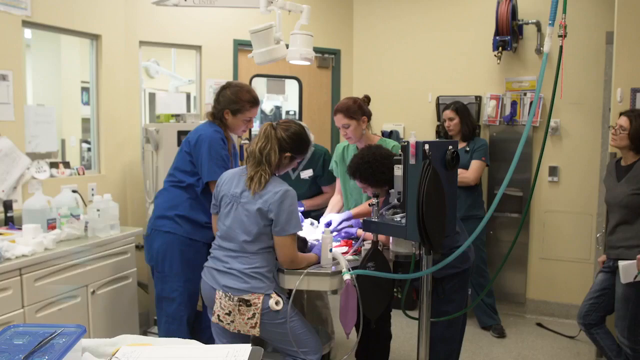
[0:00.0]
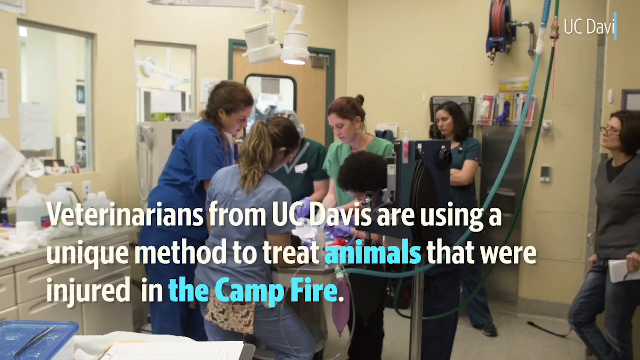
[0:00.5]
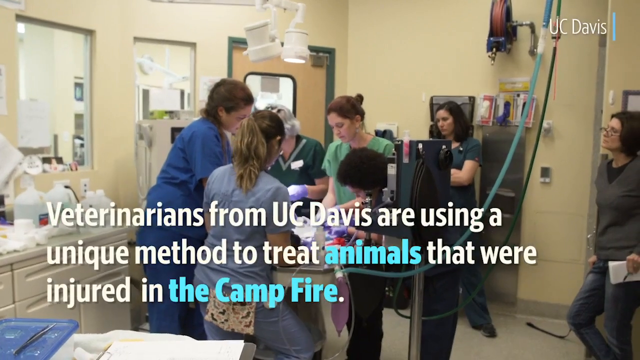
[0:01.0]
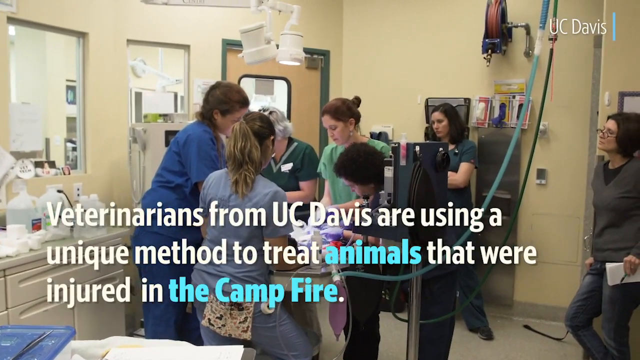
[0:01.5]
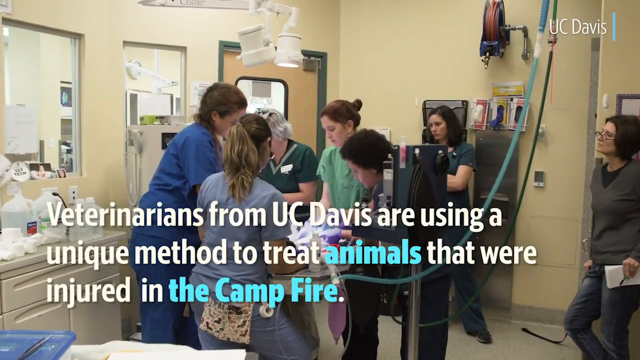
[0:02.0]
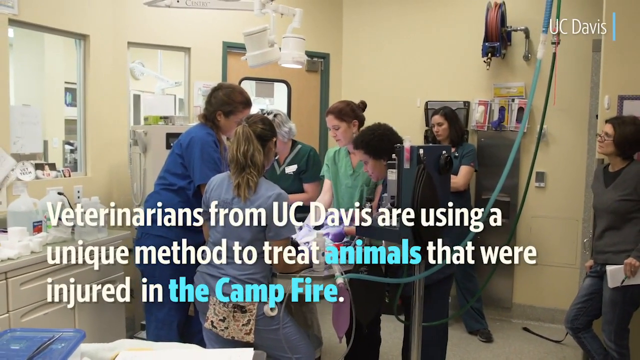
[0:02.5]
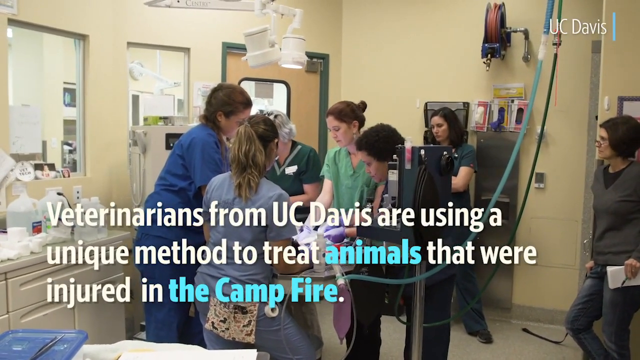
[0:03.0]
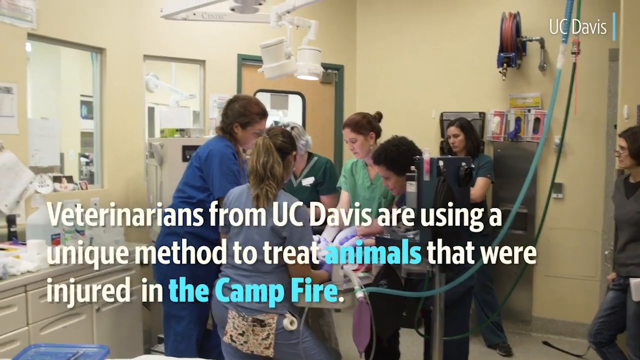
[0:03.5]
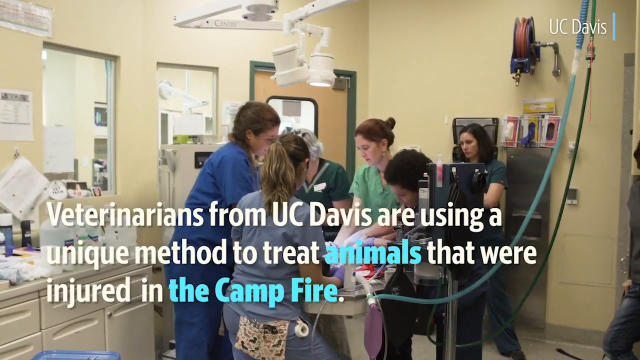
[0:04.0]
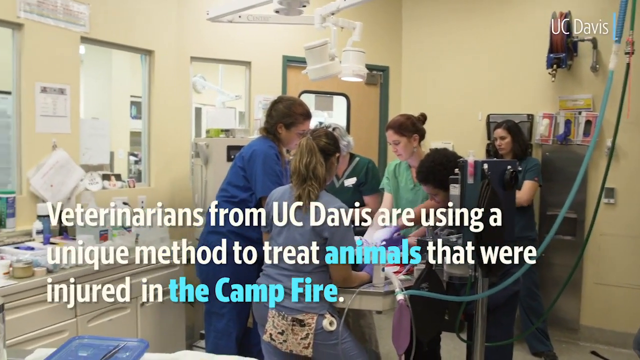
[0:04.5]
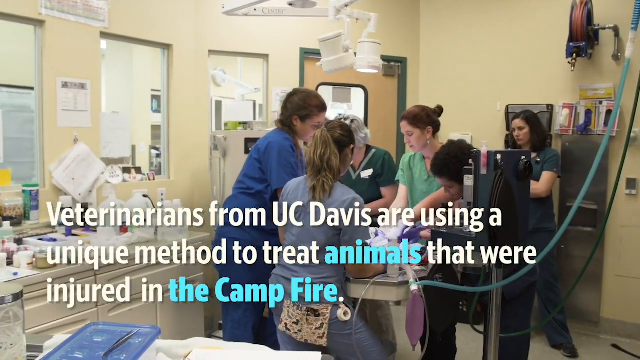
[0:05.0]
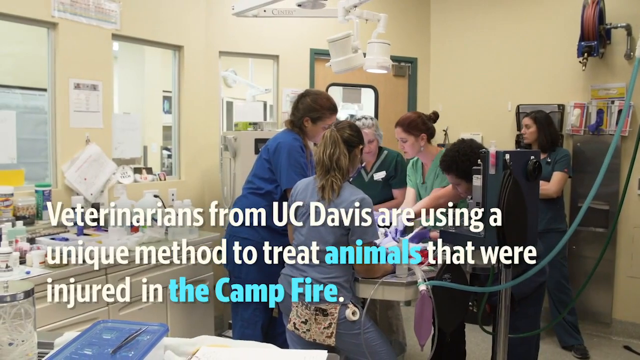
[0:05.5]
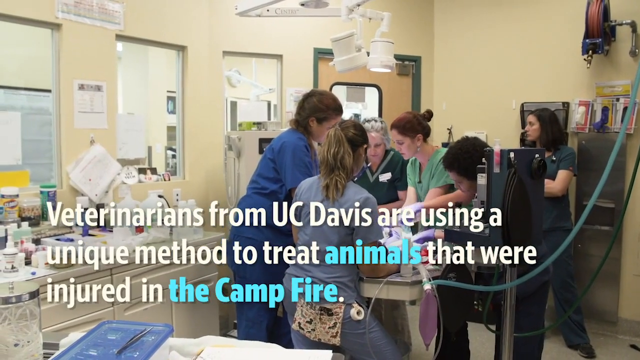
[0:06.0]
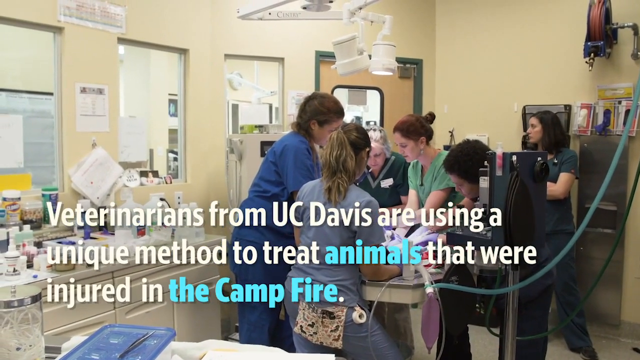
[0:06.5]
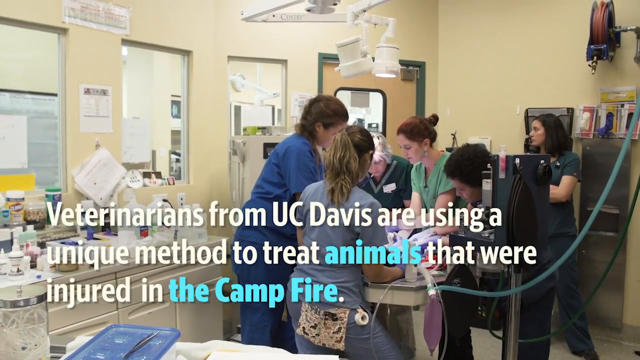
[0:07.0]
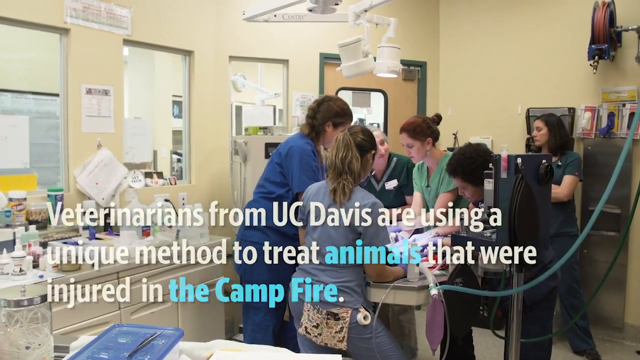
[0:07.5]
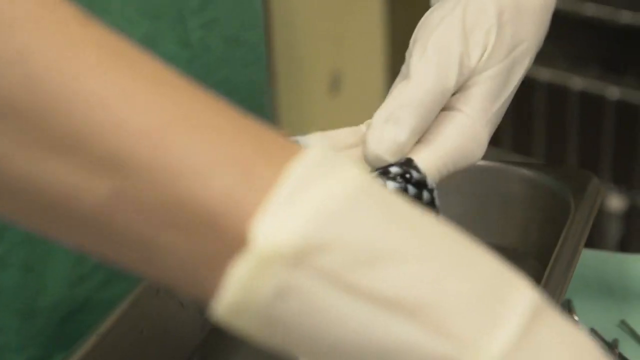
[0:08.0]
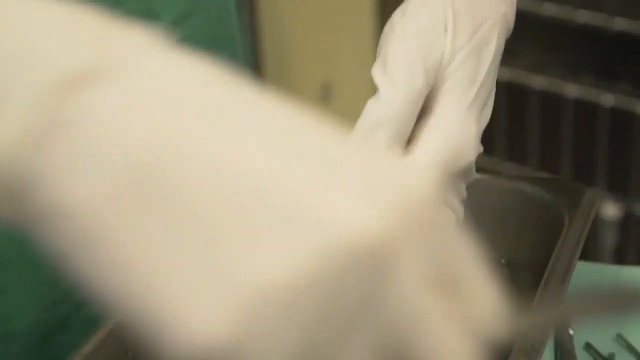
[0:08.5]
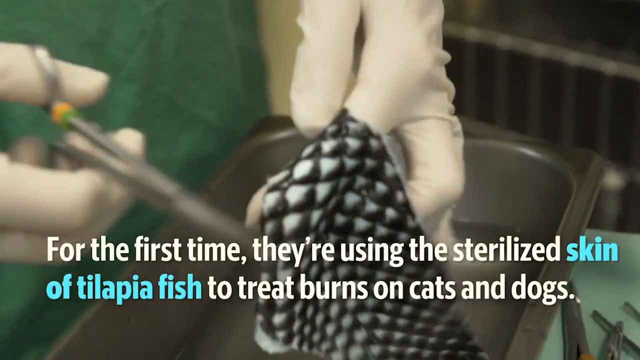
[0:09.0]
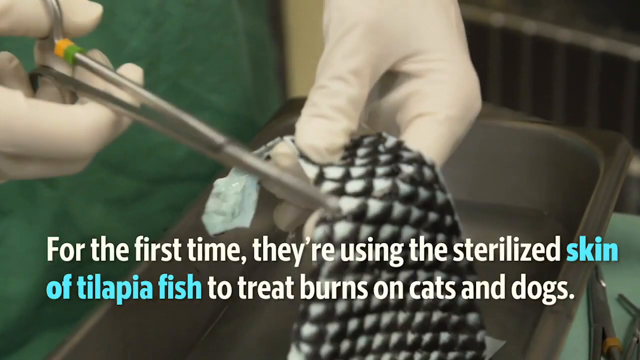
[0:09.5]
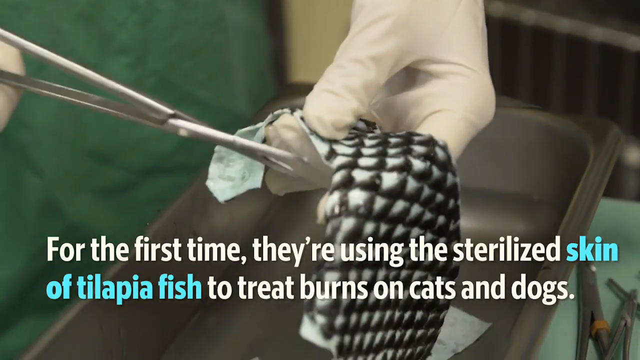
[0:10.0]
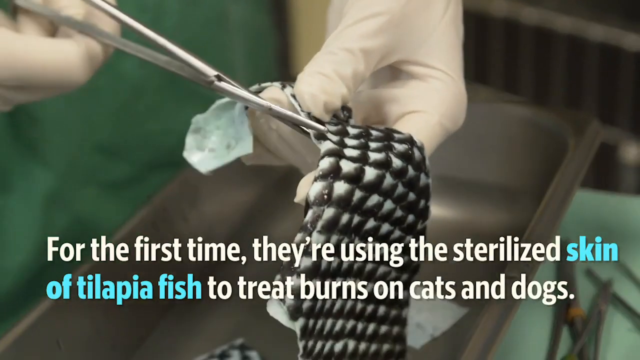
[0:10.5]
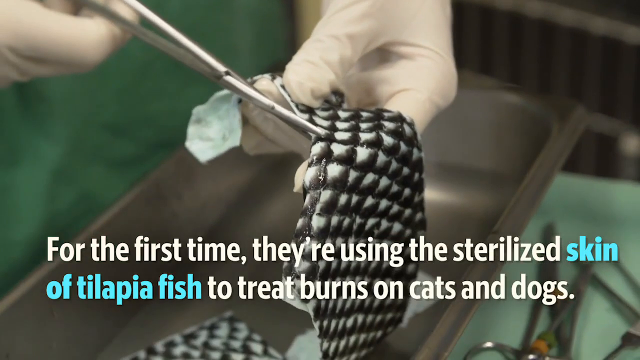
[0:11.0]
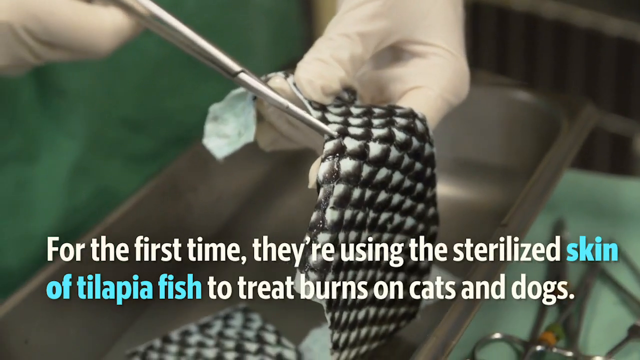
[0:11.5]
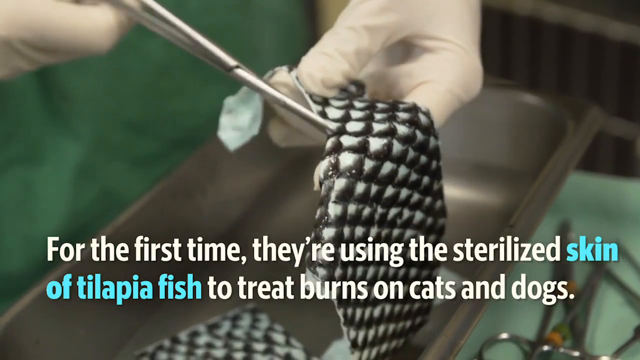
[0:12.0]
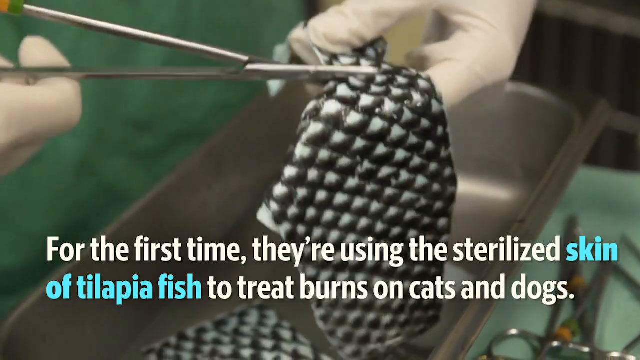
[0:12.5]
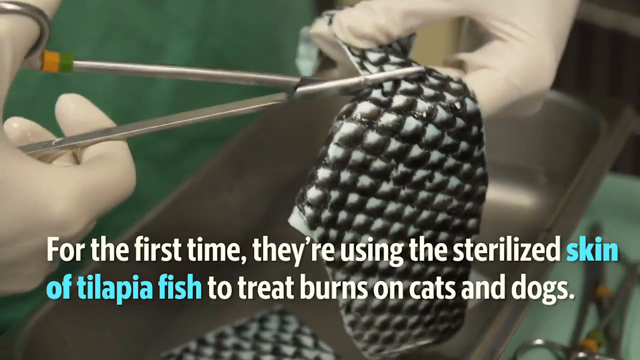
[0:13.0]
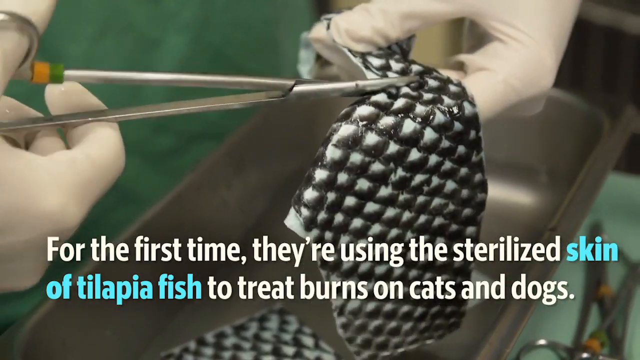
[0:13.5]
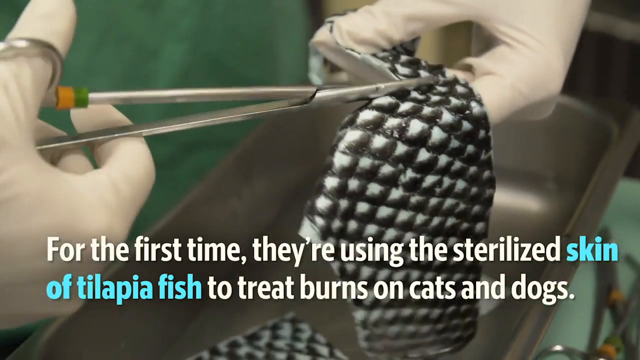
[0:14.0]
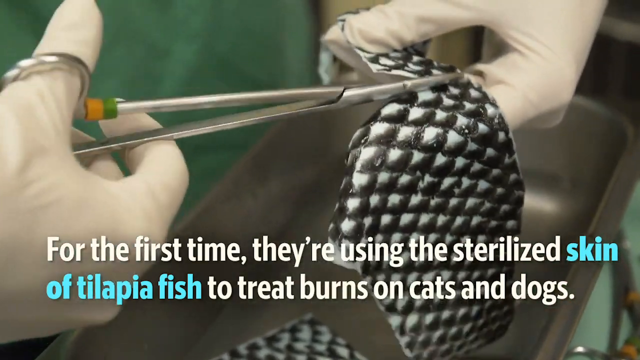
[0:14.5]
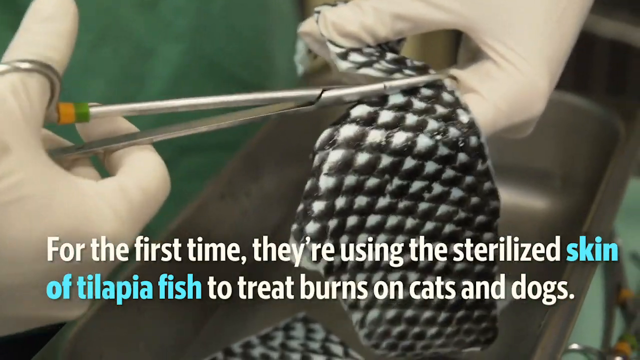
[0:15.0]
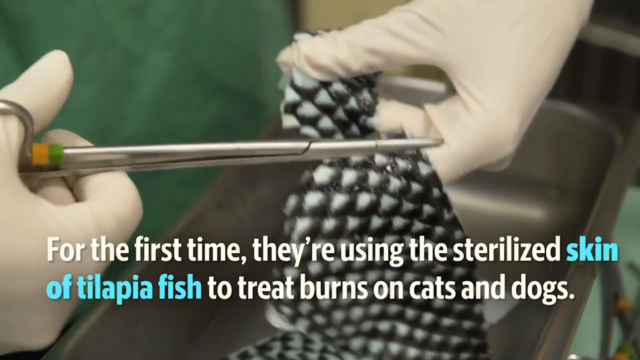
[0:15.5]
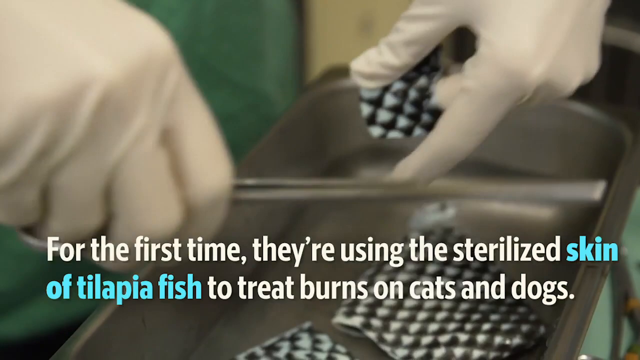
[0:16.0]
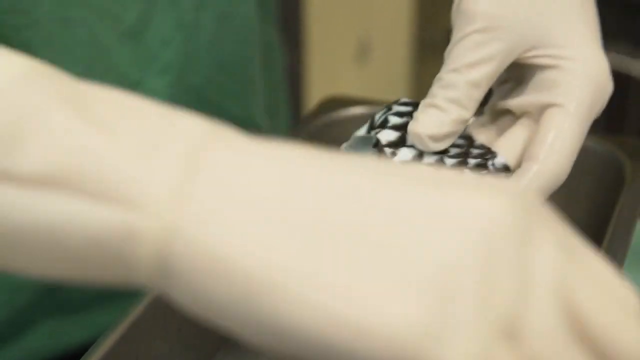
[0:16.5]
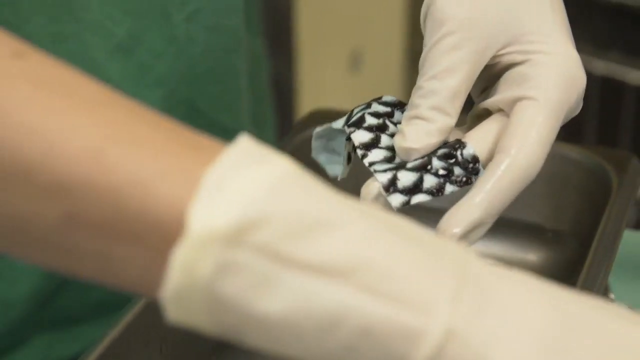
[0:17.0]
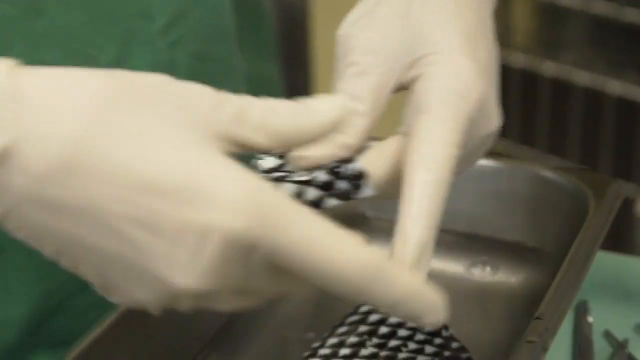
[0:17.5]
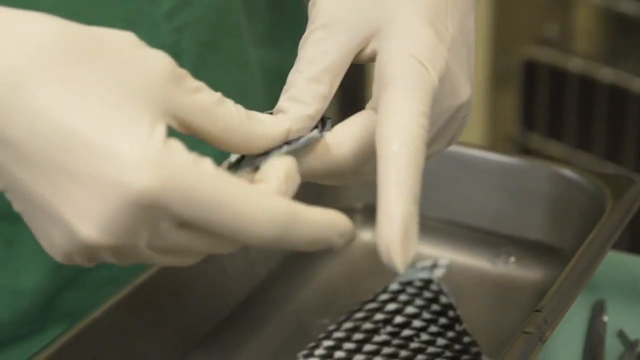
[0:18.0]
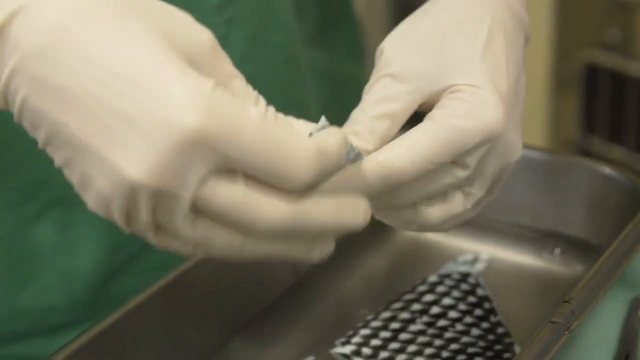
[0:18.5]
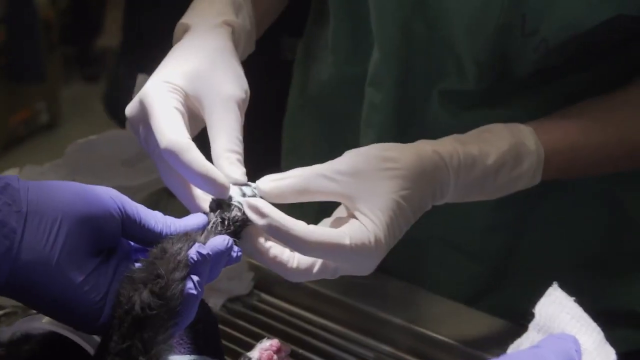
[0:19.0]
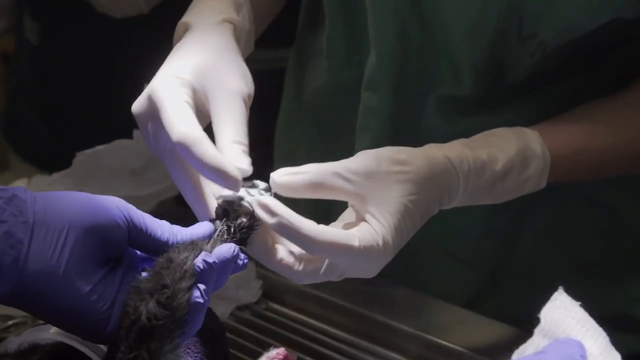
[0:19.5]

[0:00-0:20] The scene appears to be a medical environment, with people in medical uniforms standing around. The camera then zooms in as text appears: "For the first time, they're using the sterilized skin of tilapia fish to treat burns on cats and dogs." This suggests the setting is probably a veterinary practice. Approximately seven people are around a table in what appears to be an operating room, treating an animal, such as a dog or a cat, that has been burned. A long blue tube hangs from the ceiling down to the operating table. On the left, gallons of fluid are sitting on top of a white table. The medical staff wear different colored scrubs, including light blue, dark blue, green, and gray, and they all appear to be female and in their 30s or younger.